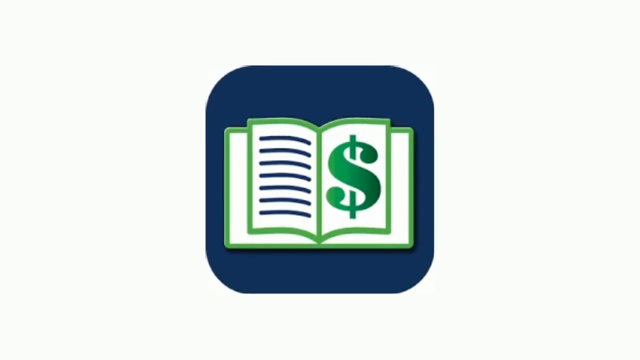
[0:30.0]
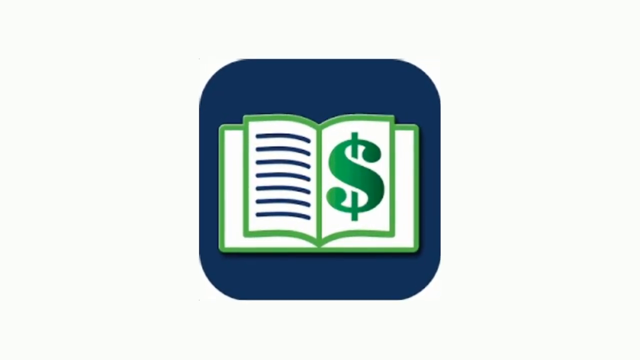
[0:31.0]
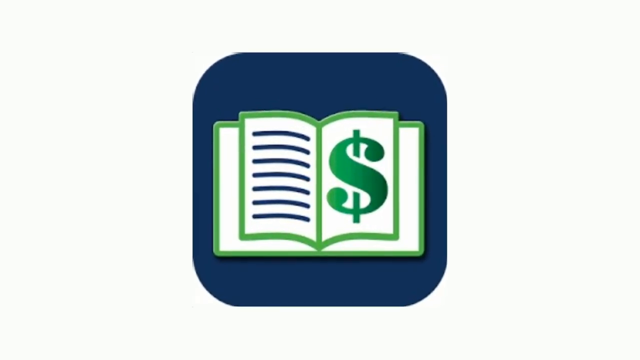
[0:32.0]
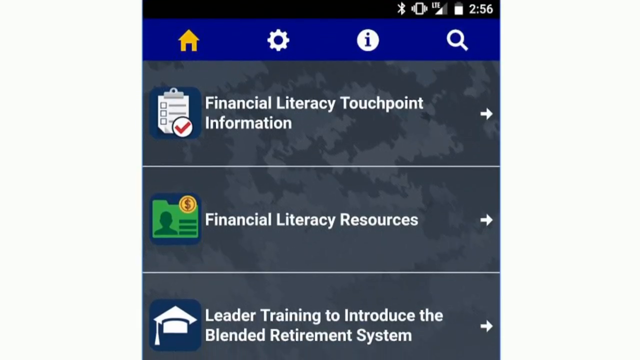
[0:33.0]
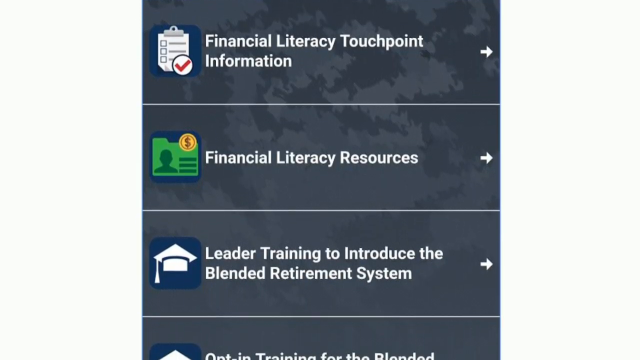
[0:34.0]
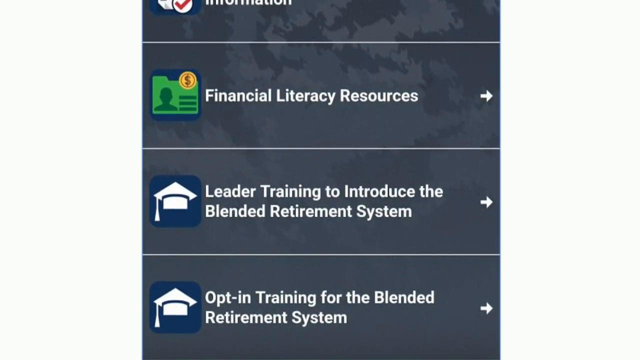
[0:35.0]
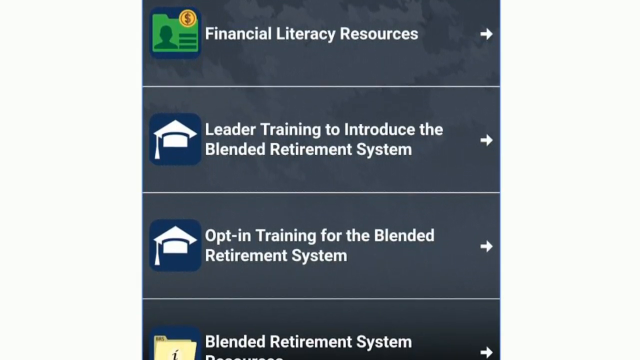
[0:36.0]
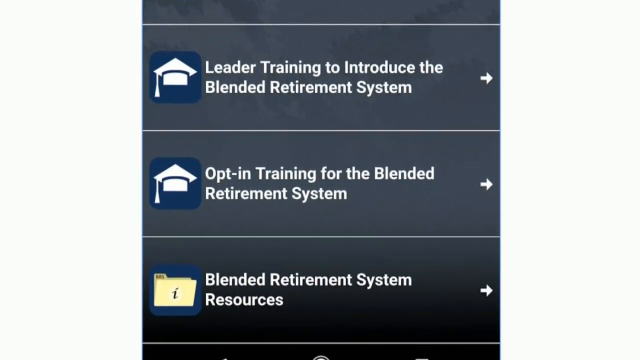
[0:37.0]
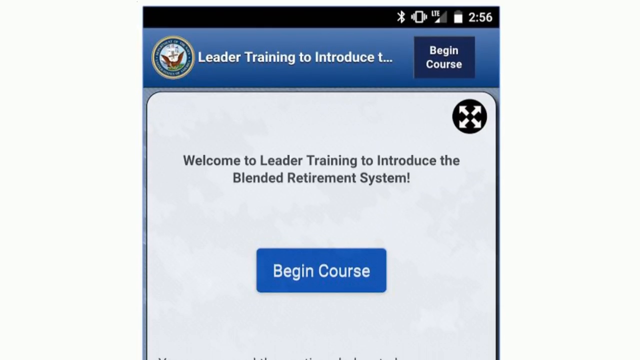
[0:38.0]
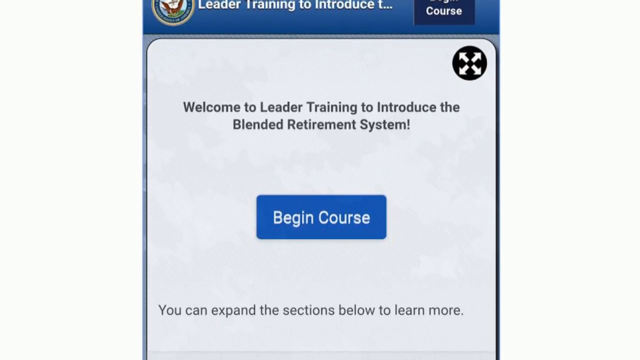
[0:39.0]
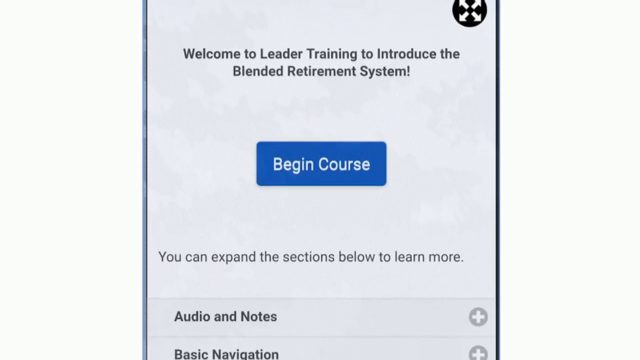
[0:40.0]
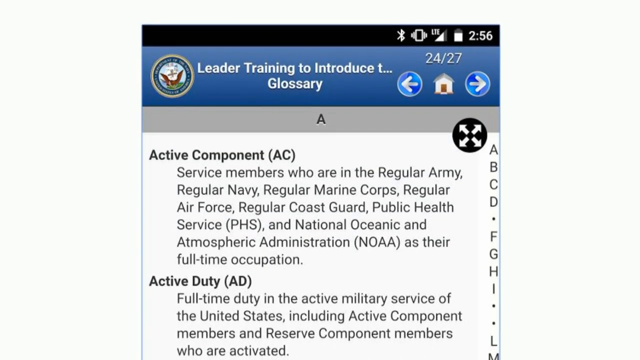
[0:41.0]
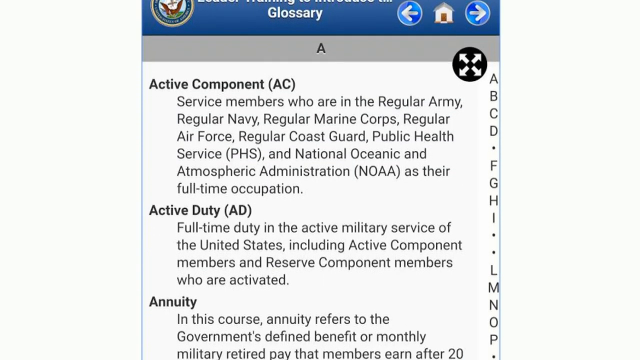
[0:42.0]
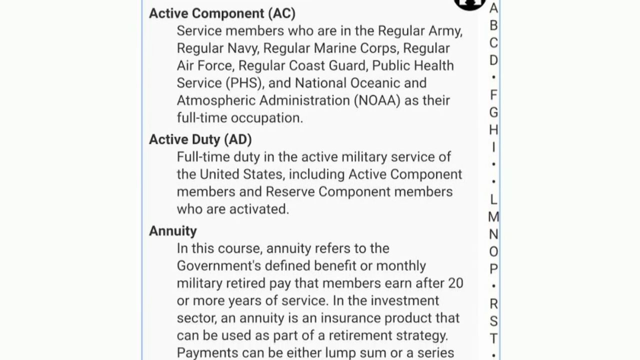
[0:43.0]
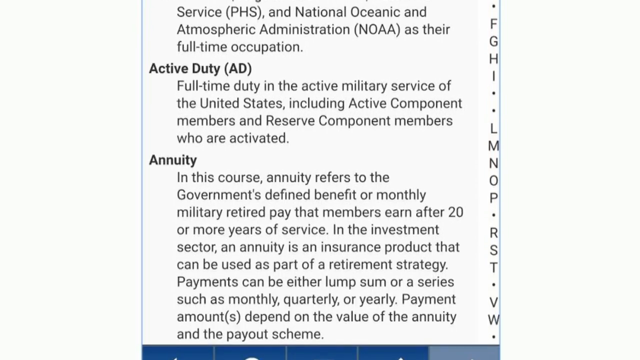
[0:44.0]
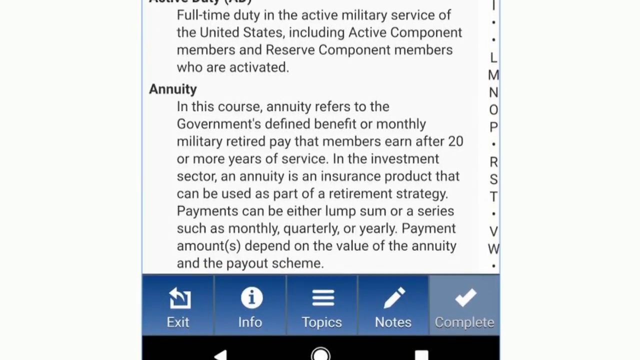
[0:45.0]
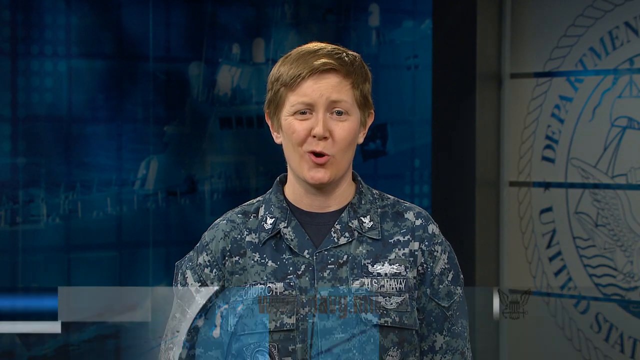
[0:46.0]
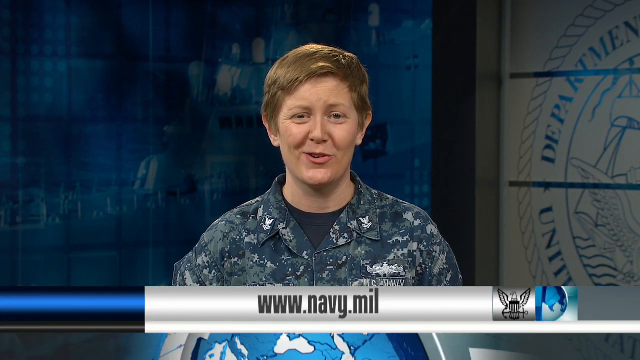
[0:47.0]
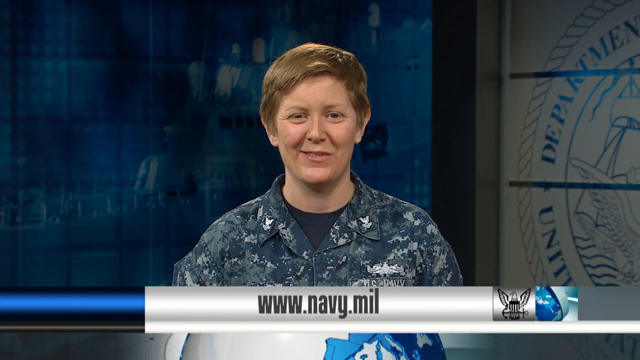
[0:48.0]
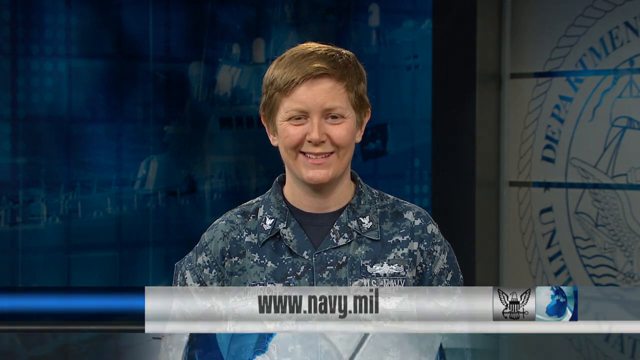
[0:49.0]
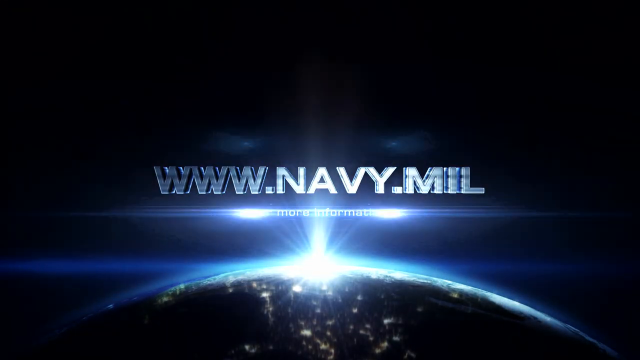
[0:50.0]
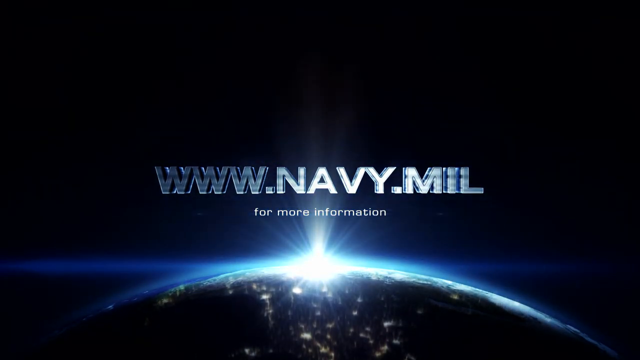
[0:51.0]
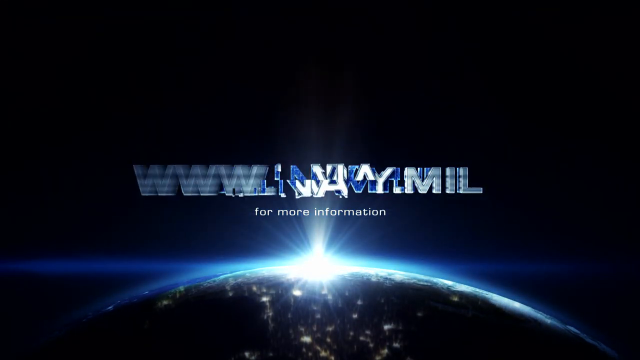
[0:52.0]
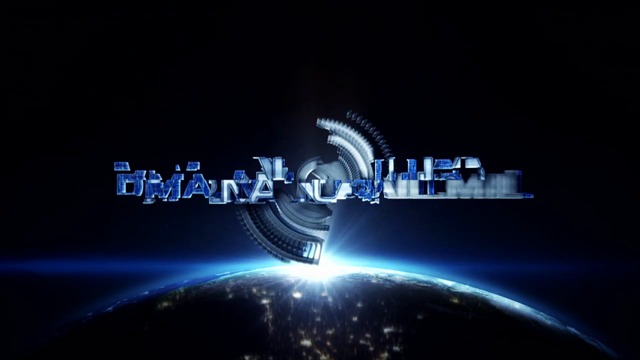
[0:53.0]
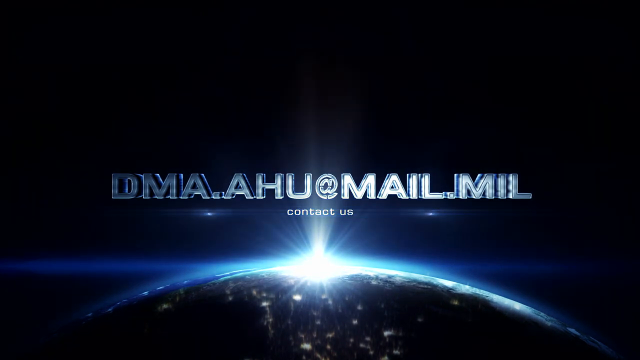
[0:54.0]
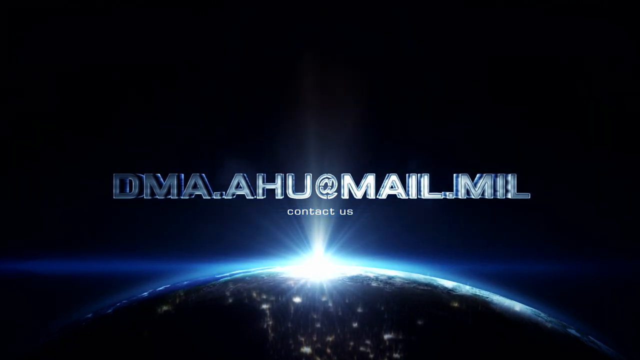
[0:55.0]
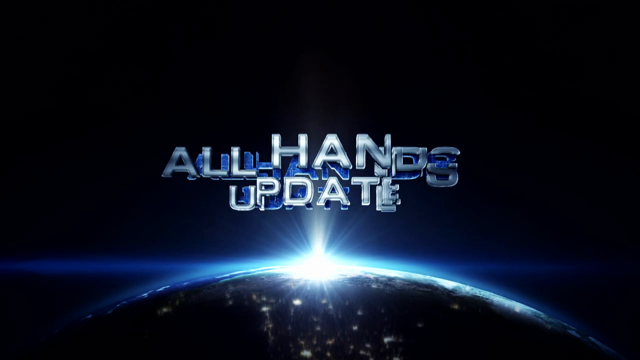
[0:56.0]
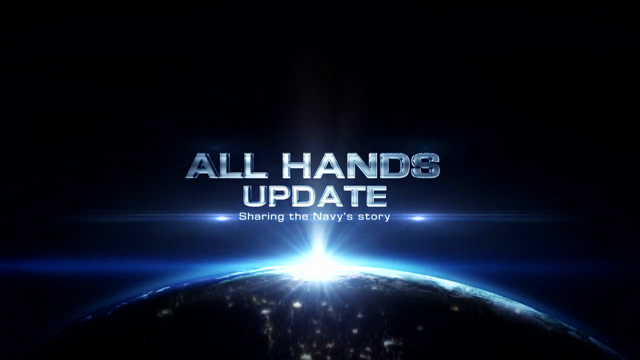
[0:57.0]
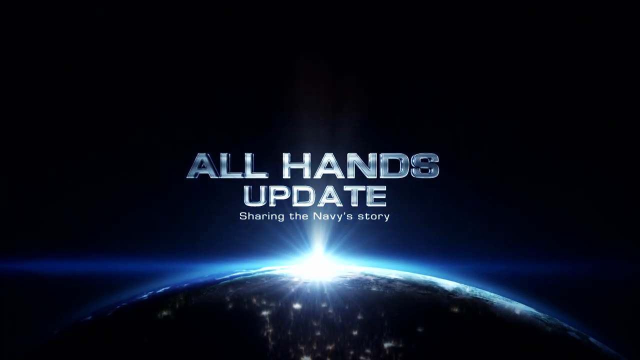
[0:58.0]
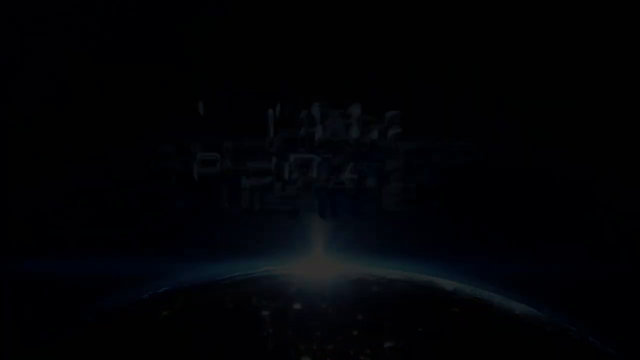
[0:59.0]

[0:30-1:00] A blue logo in the center of the frame shows a book with lines on the left and a dollar sign on the right, and it increases in size. What looks like a phone's page appears and scrolls upward; the time is 2:56 and there are four logos at the top. Scrolling down shows "financial literacy", "touch point information", "financial literacy resources", "leader training to introduce the blended retirement system" and "opt-in training for the blended retirement system". Another screen comes up that says "leader training to introduce", with "welcome to leader training to introduce the blended retirement system" below it, a blue button that says "begin course", and the text "you can expand the sections below to learn more". A new page is a glossary starting with the letter A: the first entry is "active component" with some details, followed by "active duty", abbreviated "AD", with details, and then "annuity". The video goes back to the female being recorded in front of a background with the logo of one of the military branches, and "www.navy.mil" appears. The video wraps up with various elements, including "all hands update" and "sharing the Navy story".